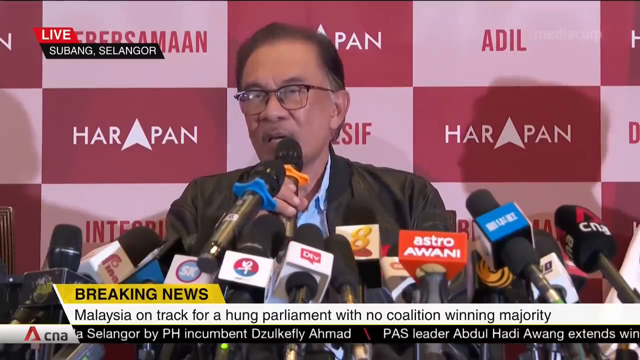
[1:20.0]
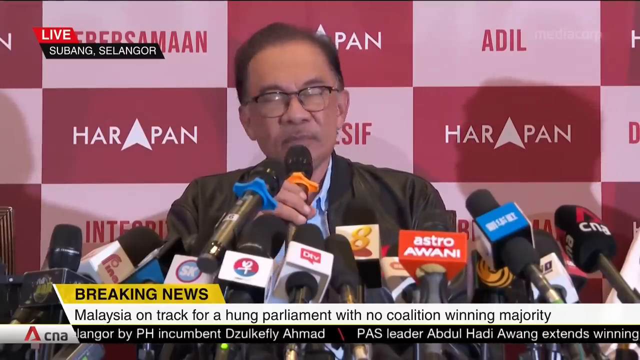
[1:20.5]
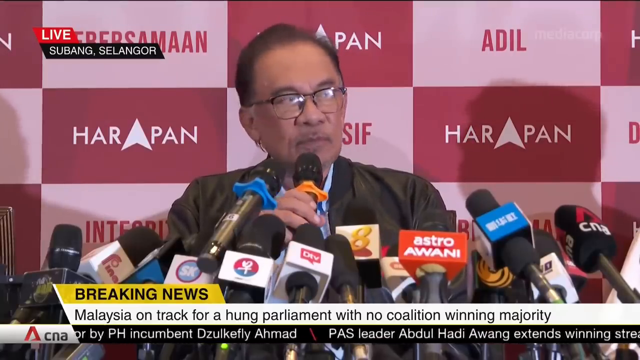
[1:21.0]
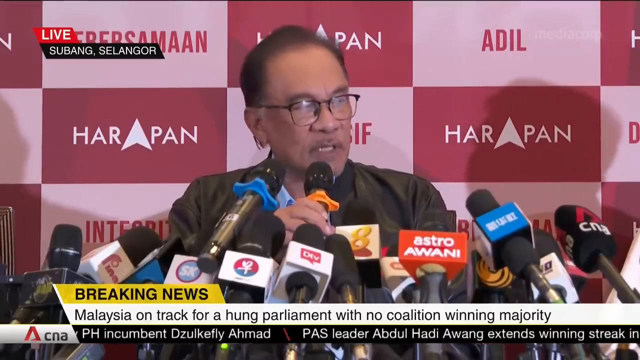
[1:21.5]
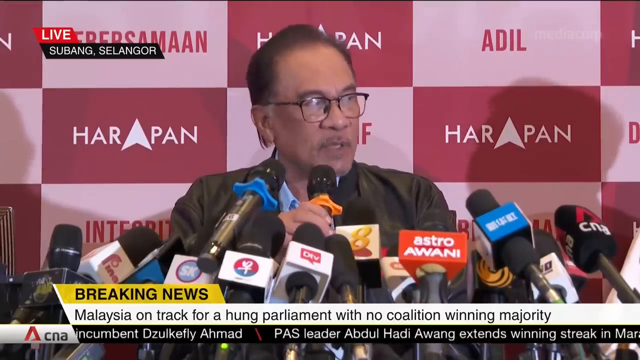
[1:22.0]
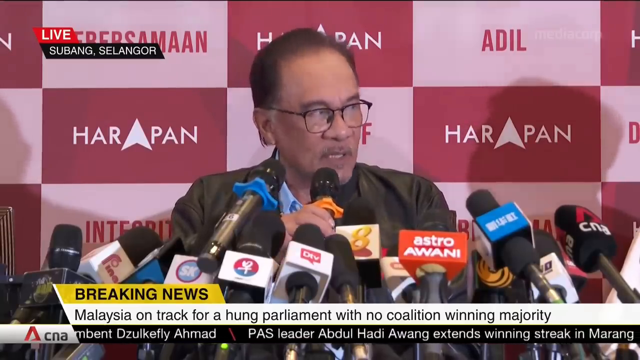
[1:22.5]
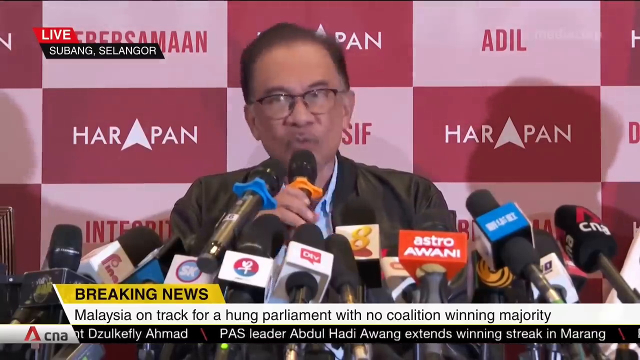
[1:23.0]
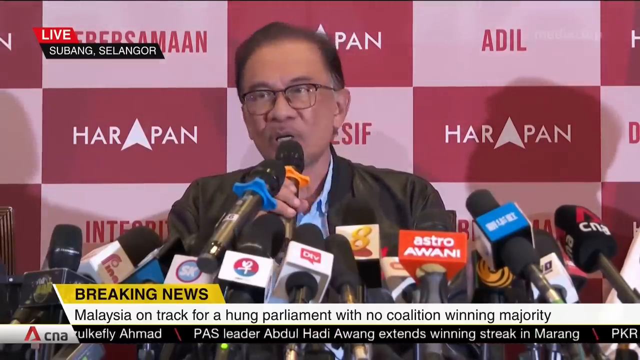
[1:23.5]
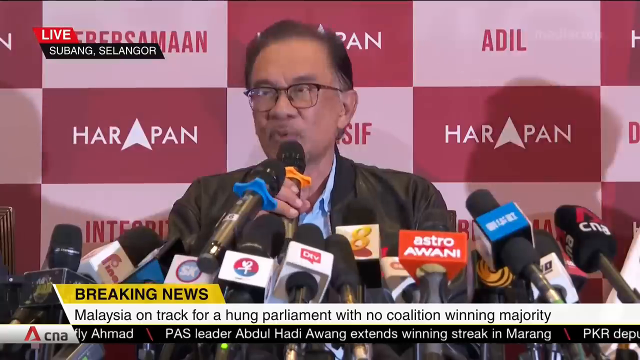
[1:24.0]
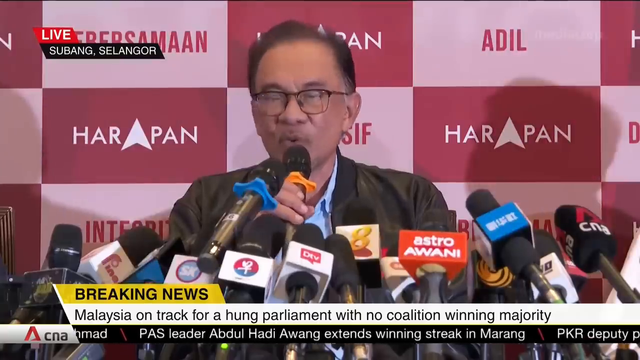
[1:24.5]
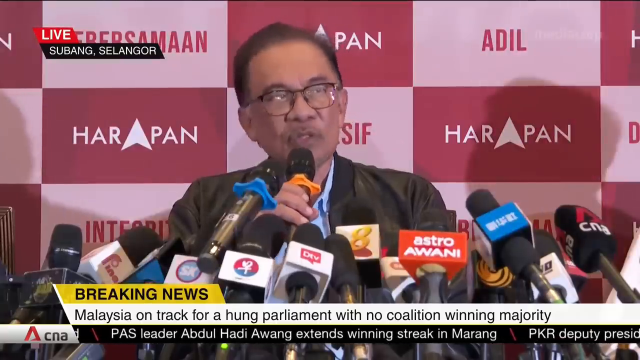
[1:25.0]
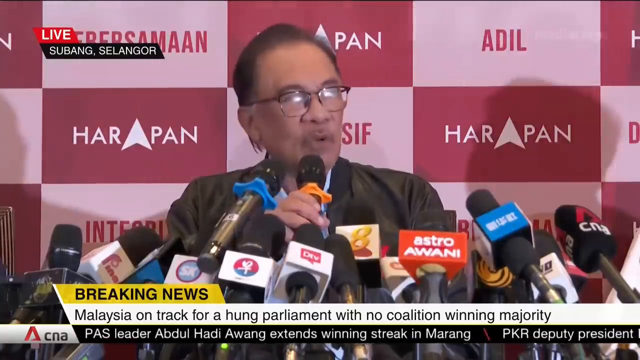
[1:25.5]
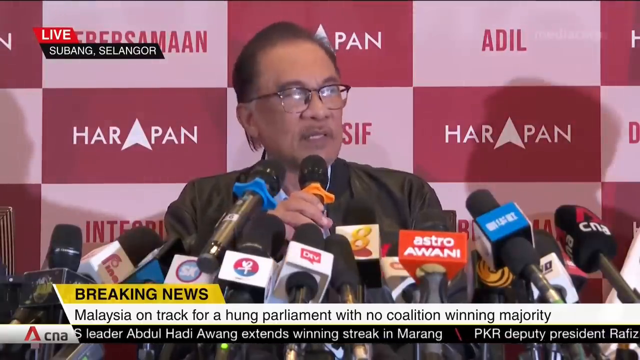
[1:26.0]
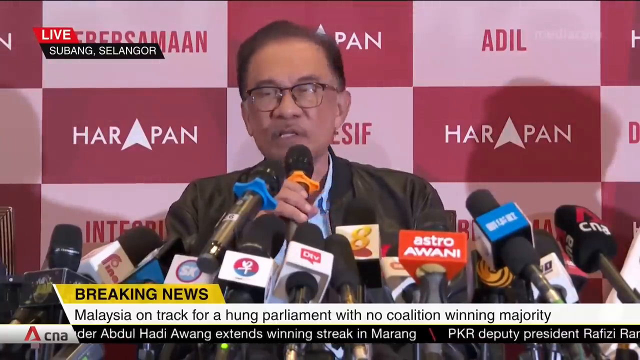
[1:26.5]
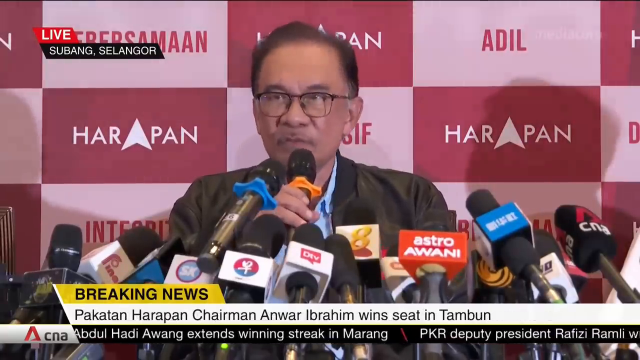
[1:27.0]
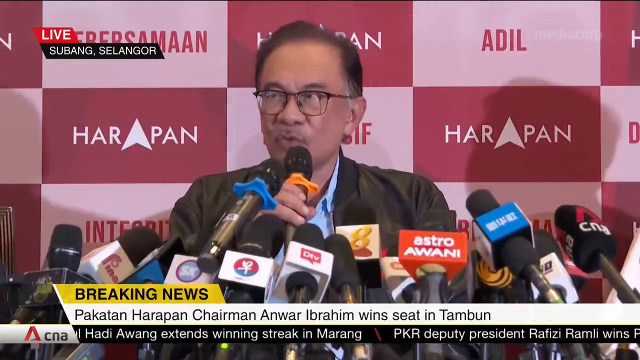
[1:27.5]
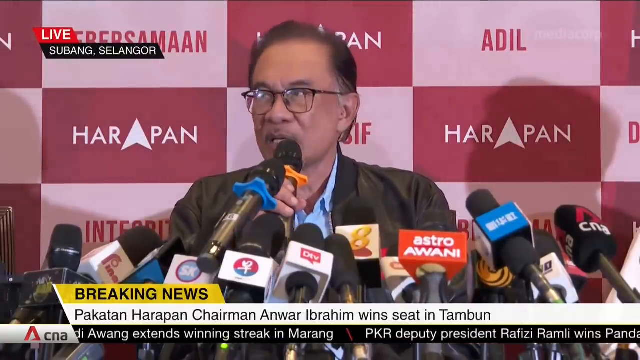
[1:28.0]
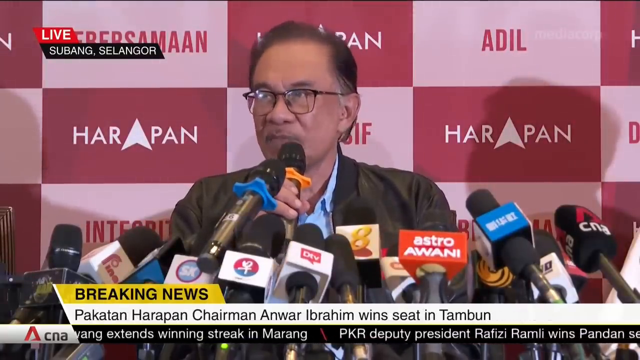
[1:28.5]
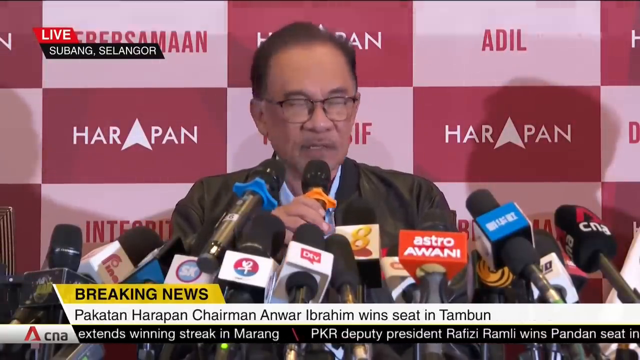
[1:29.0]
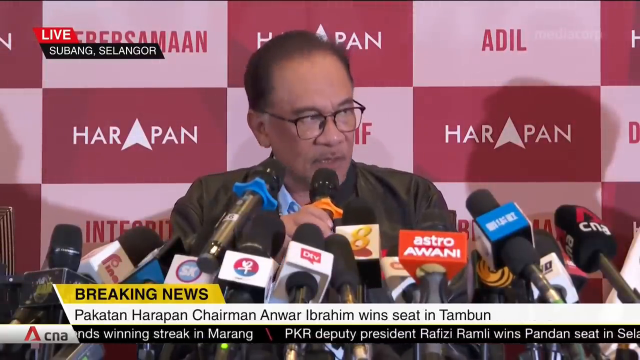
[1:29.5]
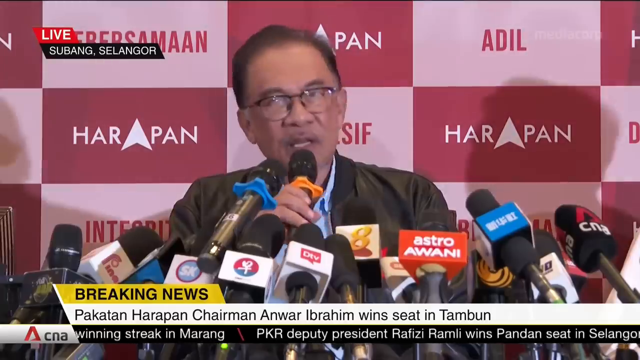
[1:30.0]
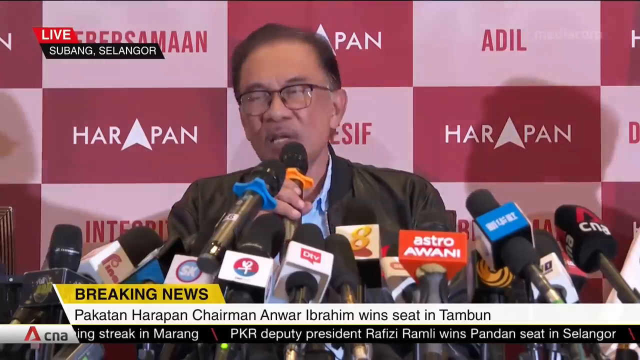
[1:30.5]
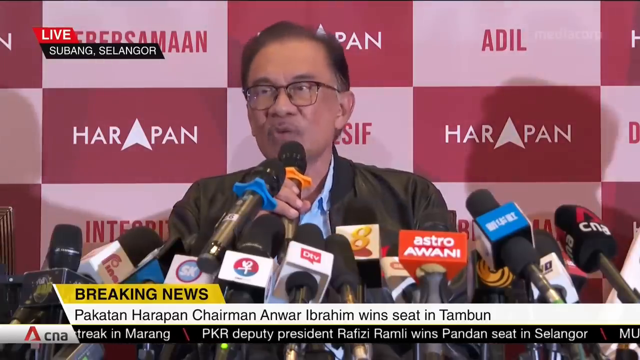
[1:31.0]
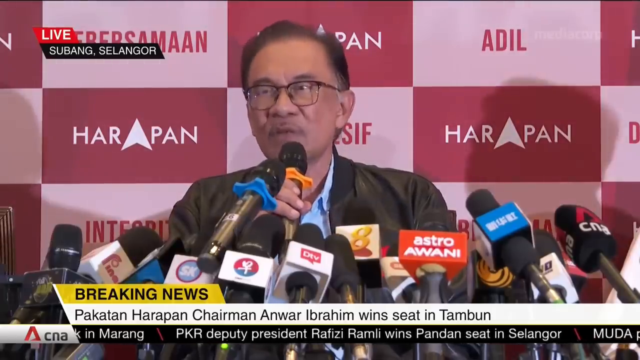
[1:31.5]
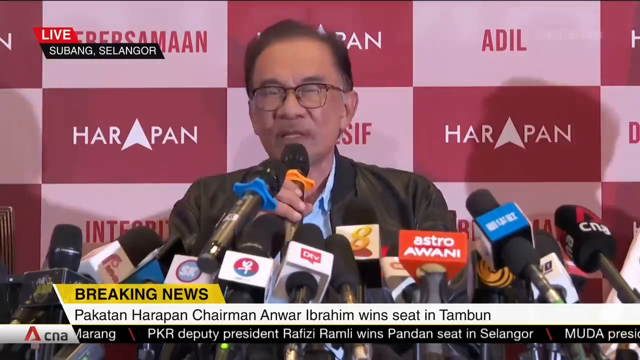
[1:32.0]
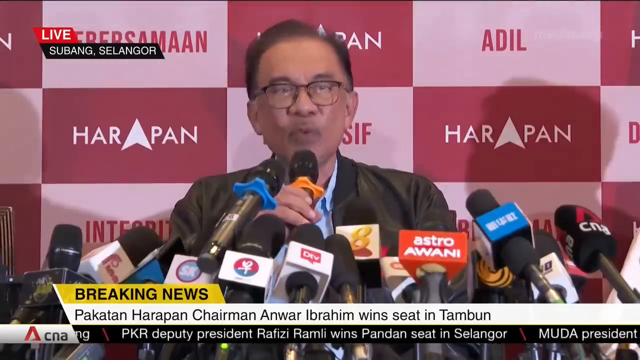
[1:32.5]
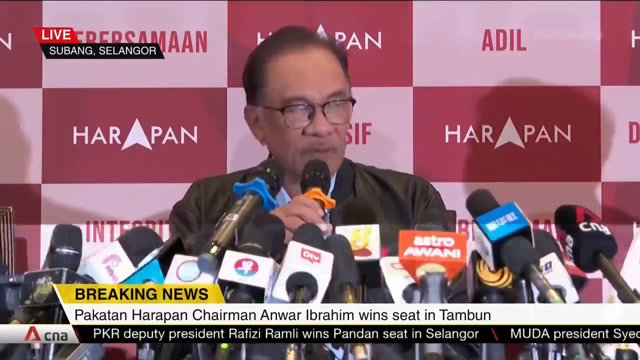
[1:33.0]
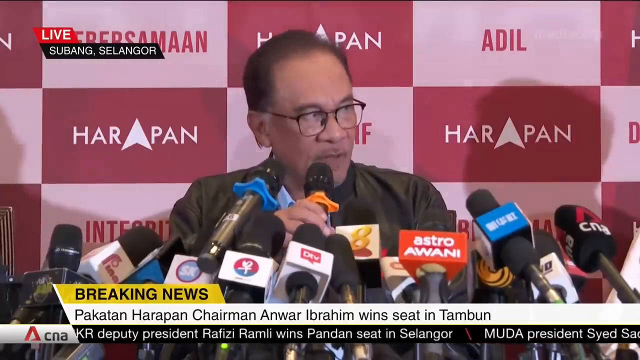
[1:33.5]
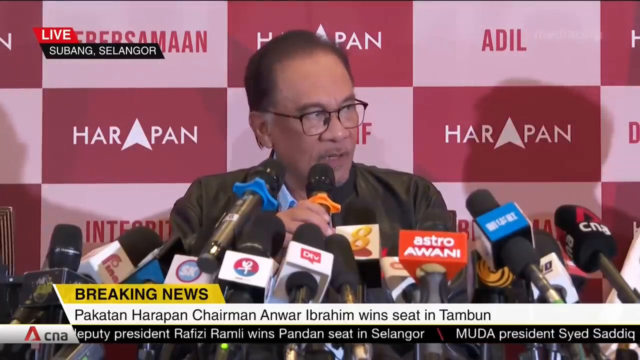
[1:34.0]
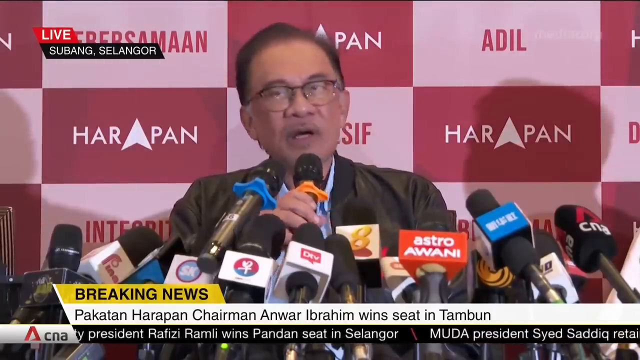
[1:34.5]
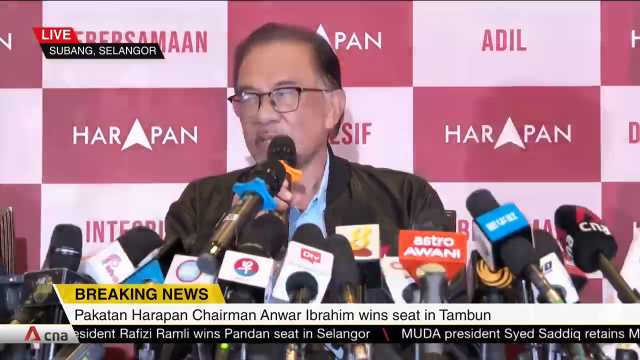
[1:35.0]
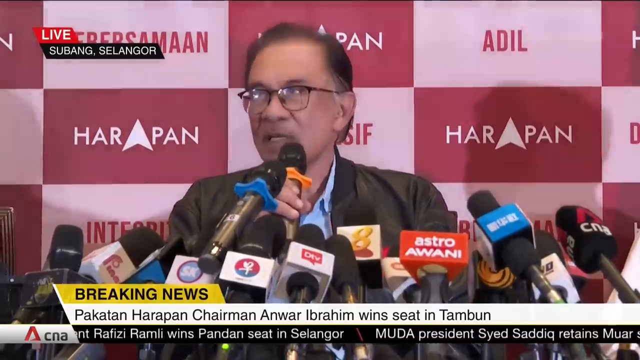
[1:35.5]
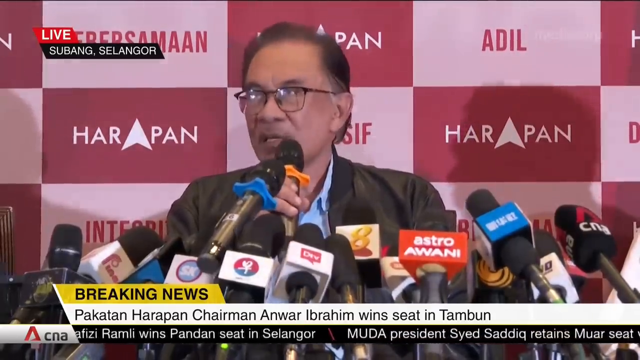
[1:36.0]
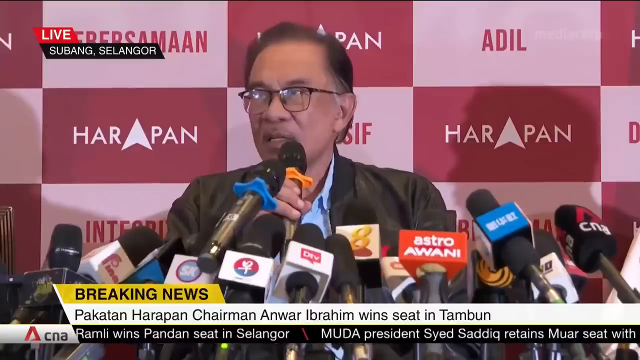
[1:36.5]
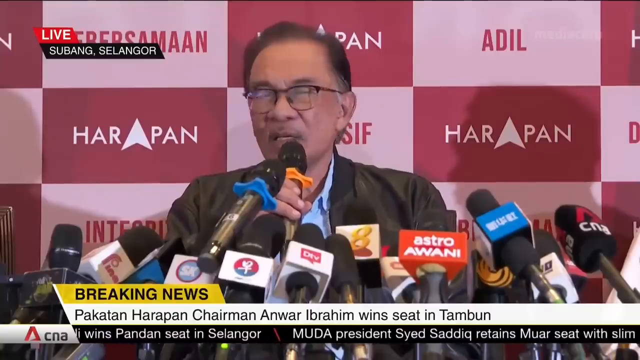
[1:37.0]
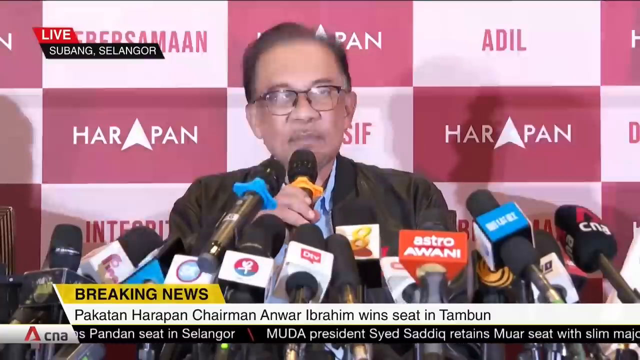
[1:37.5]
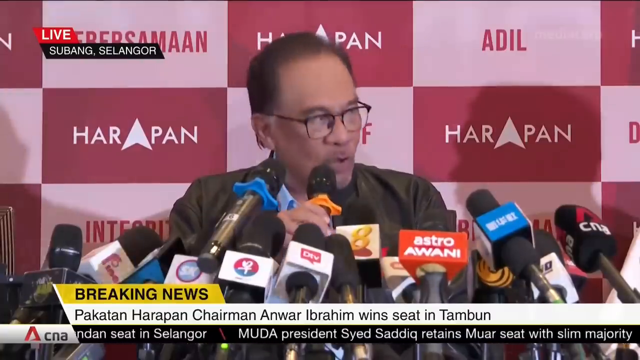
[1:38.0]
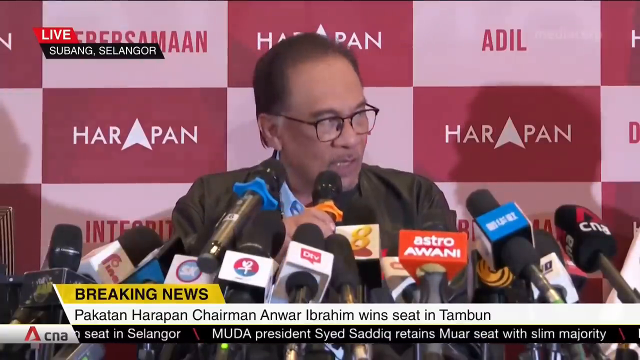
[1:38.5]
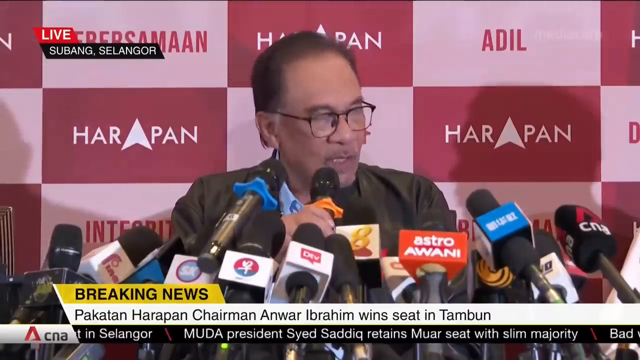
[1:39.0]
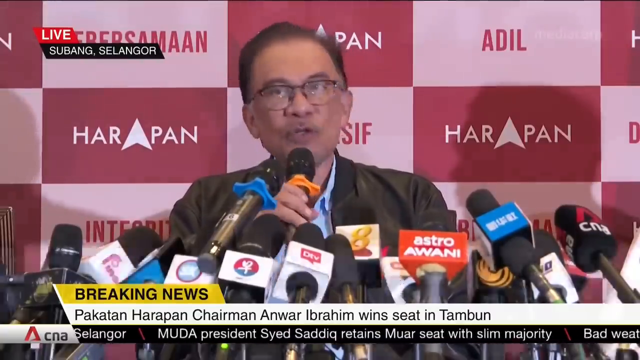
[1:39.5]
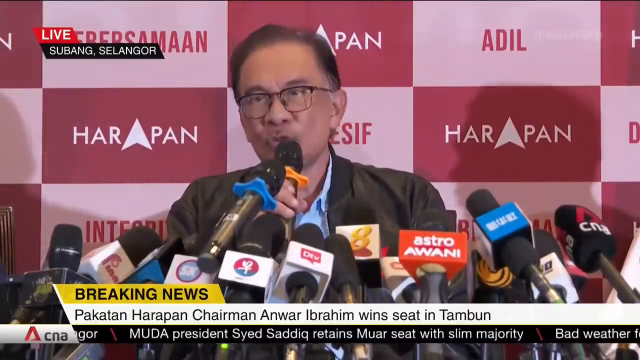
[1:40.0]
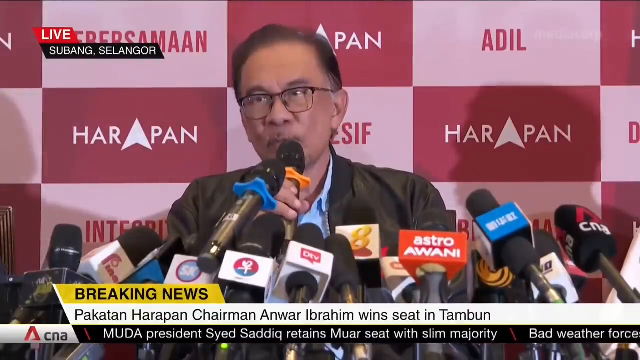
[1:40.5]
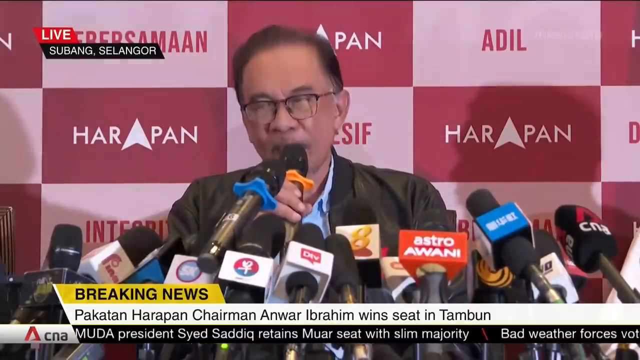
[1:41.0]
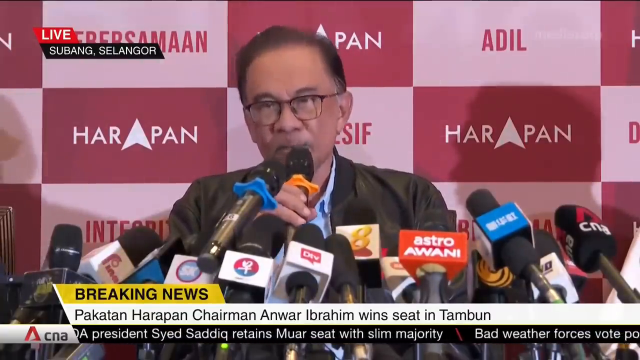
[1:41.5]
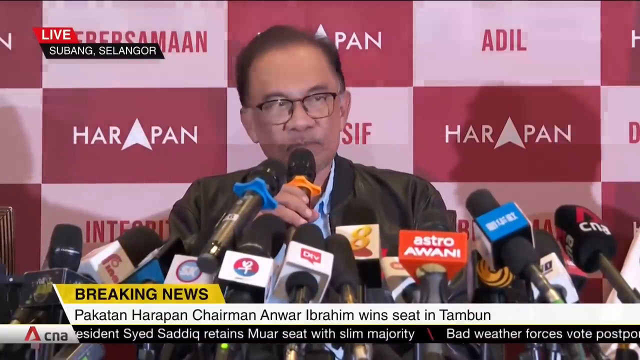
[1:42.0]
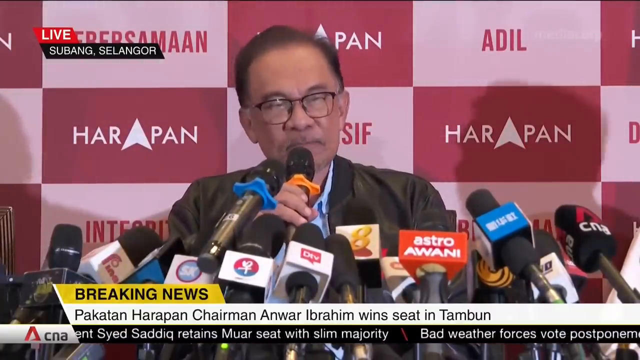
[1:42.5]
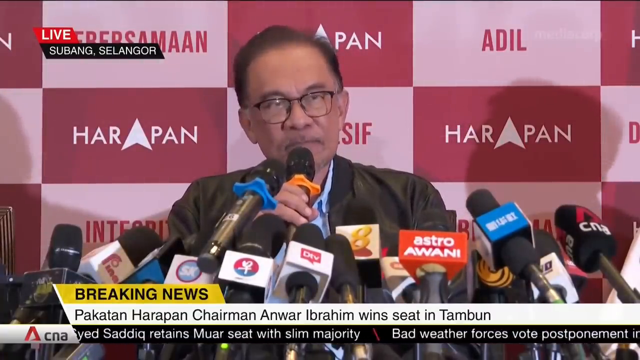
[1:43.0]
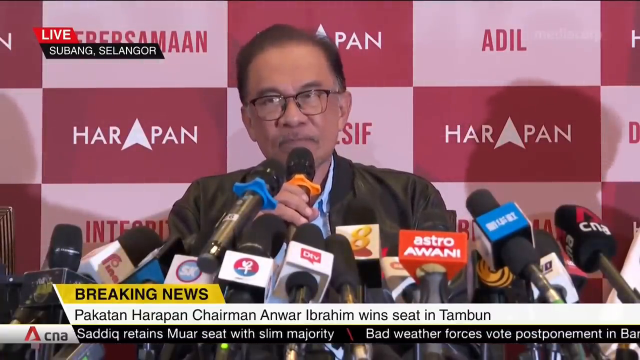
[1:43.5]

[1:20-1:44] The live breaking news coverage from Subang Selangor, Malaysia, continues as a gentleman speaks in front of a dozen or so microphones from different news companies, looking toward the camera while camera flashes go off. The banner at the bottom reads "Malaysia on track for a hung parliament with no coalition winning majority." Text then reads "Pakatan Harapan Chairman Anwar Ibrahim wins seat."